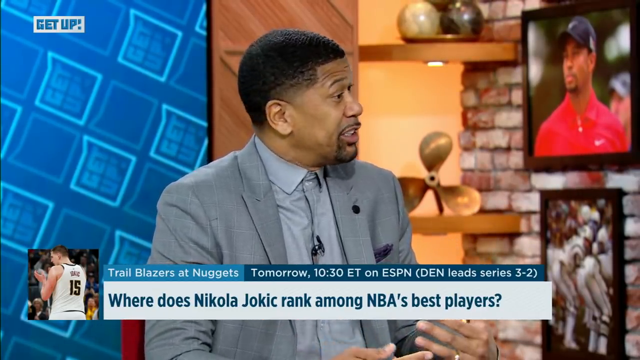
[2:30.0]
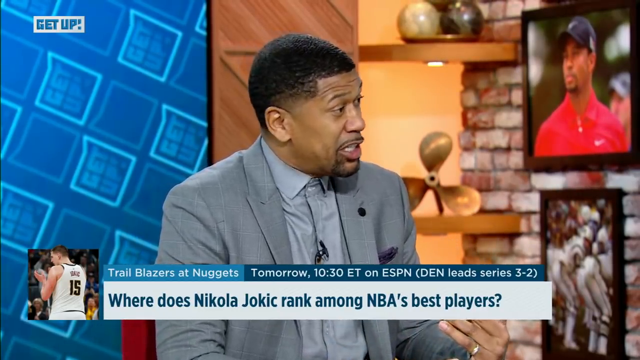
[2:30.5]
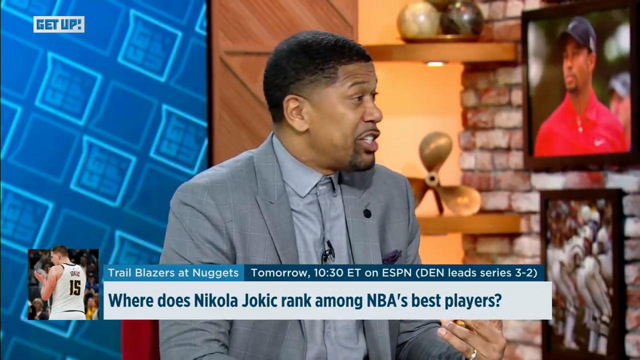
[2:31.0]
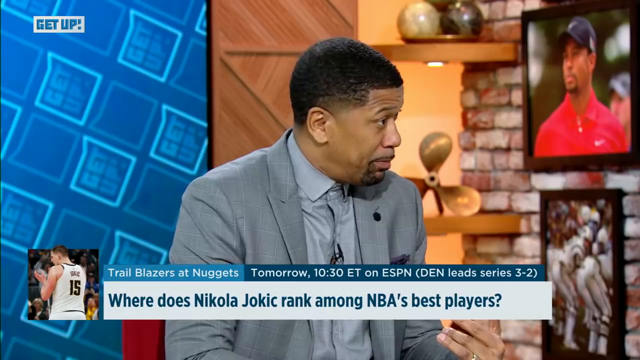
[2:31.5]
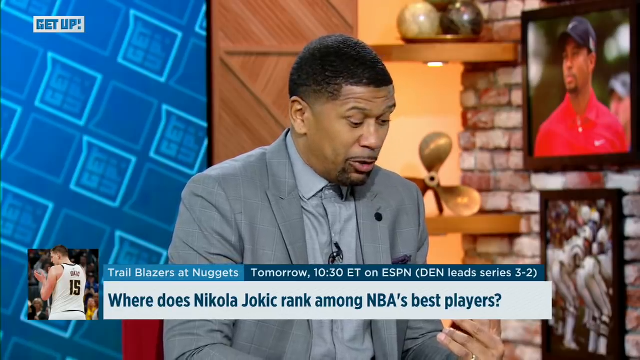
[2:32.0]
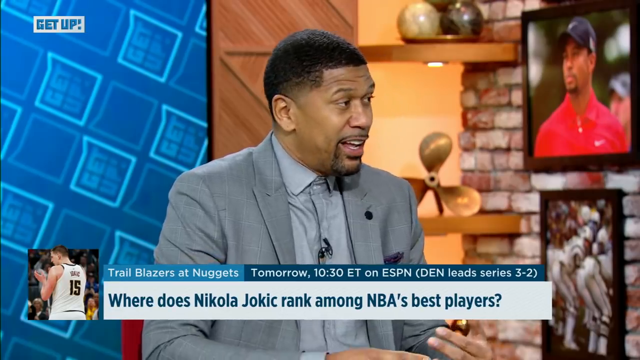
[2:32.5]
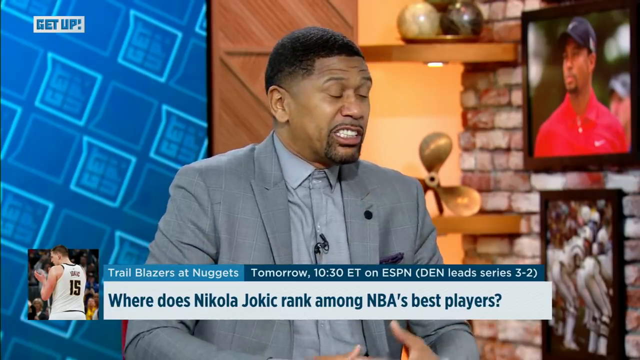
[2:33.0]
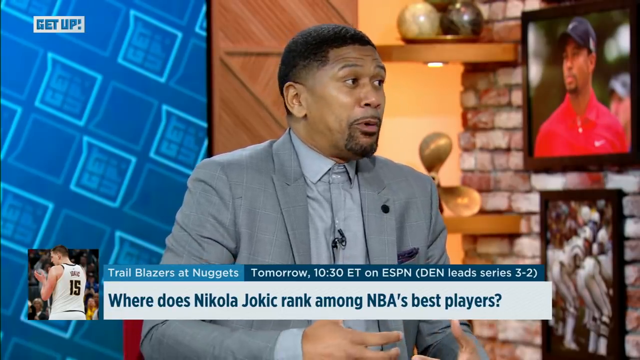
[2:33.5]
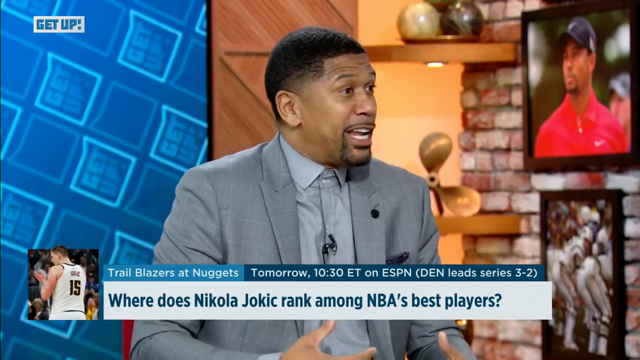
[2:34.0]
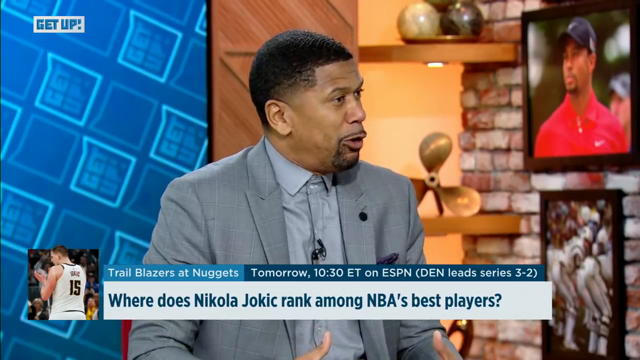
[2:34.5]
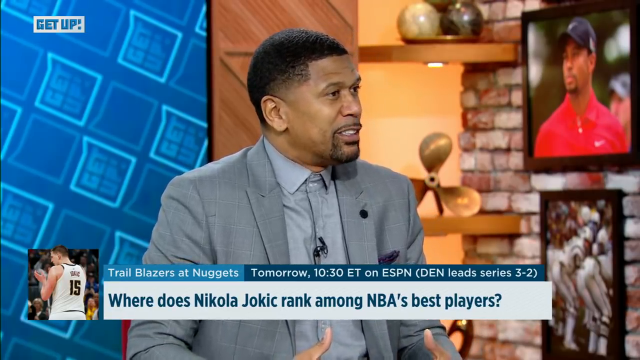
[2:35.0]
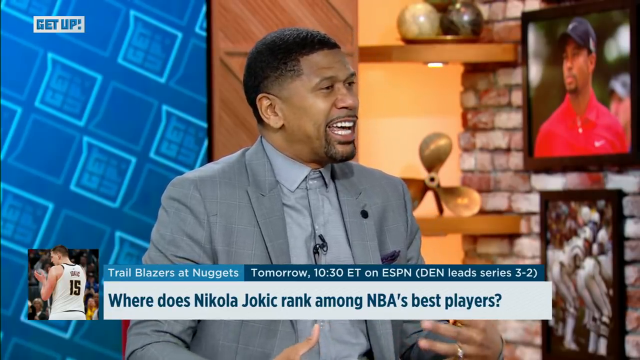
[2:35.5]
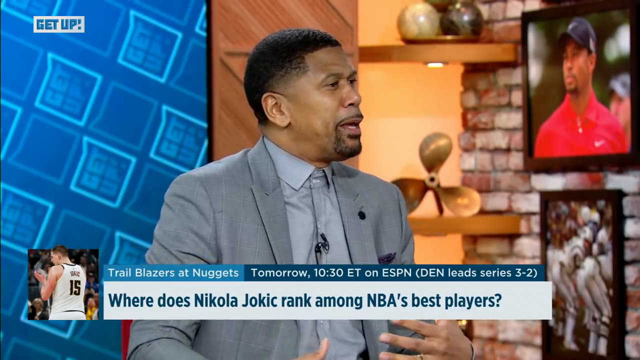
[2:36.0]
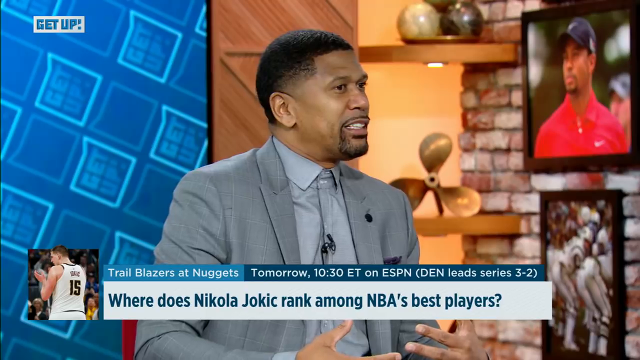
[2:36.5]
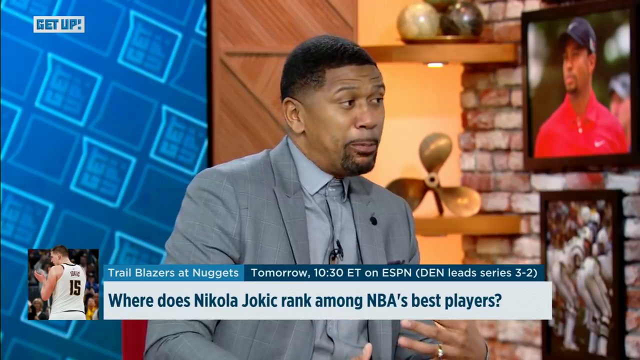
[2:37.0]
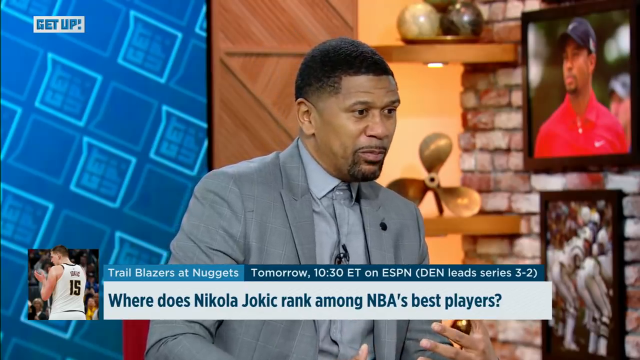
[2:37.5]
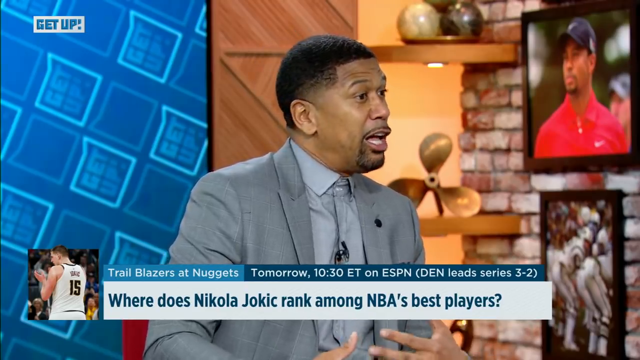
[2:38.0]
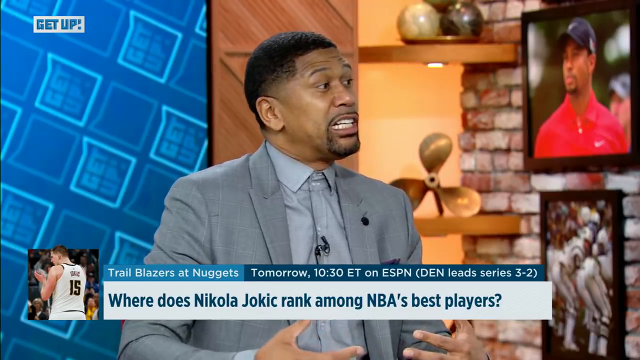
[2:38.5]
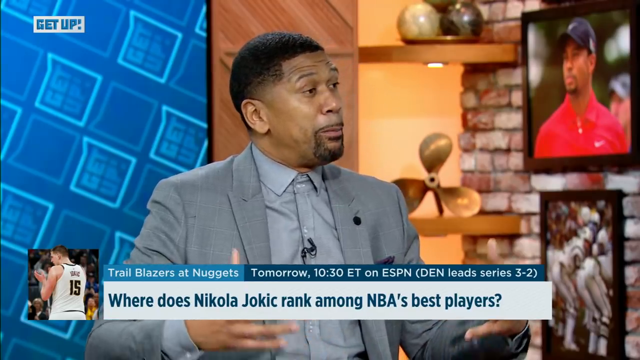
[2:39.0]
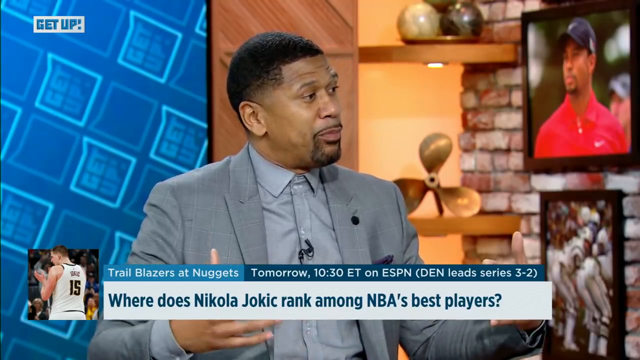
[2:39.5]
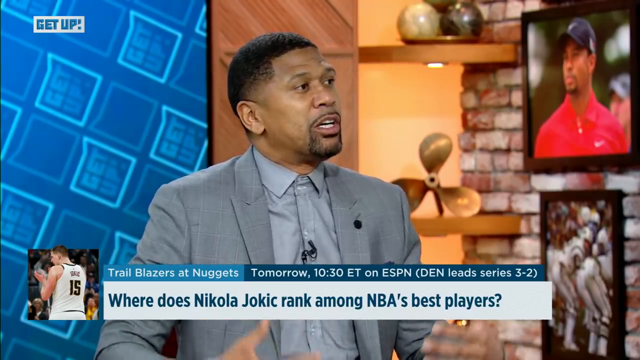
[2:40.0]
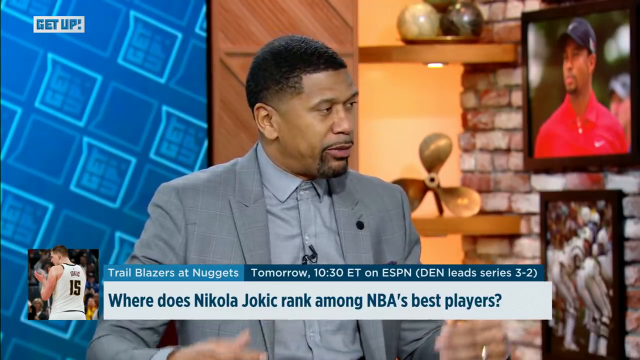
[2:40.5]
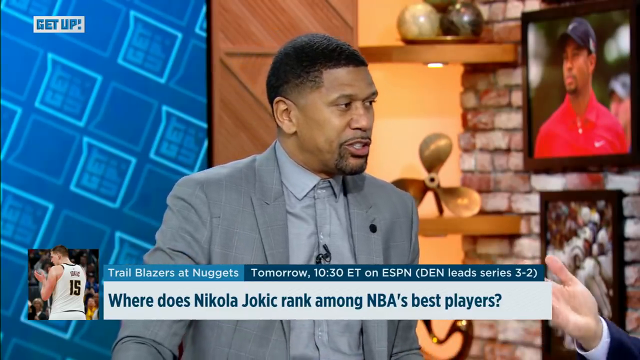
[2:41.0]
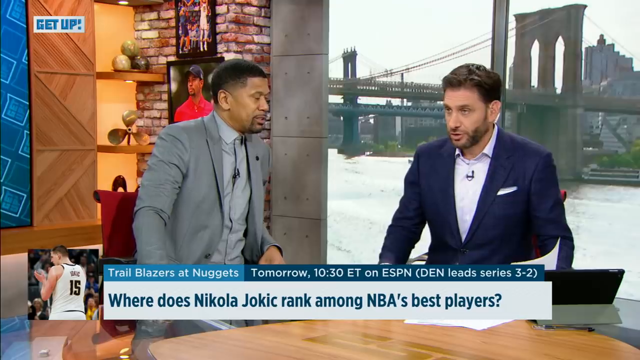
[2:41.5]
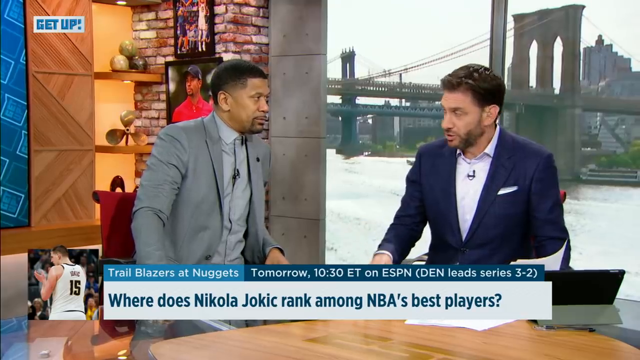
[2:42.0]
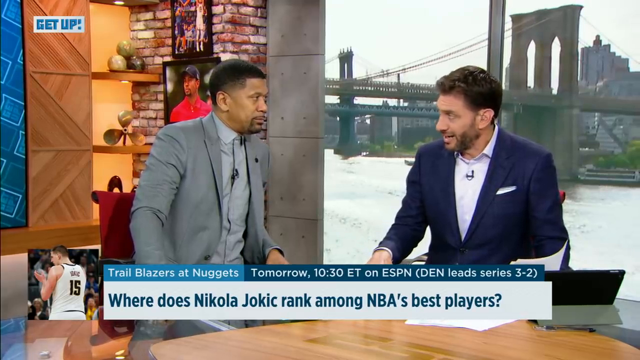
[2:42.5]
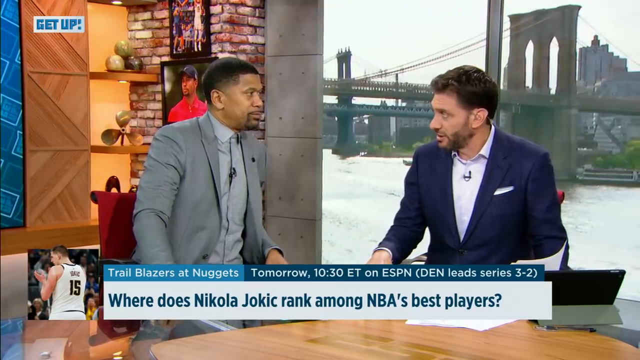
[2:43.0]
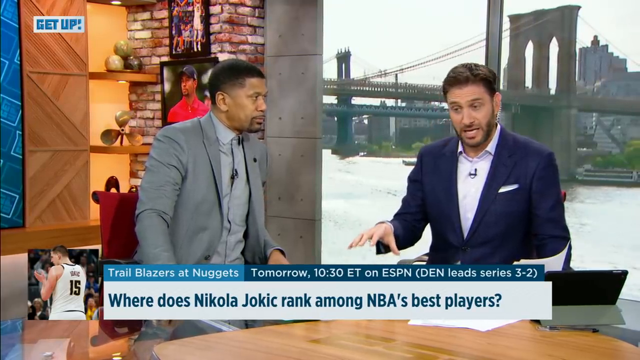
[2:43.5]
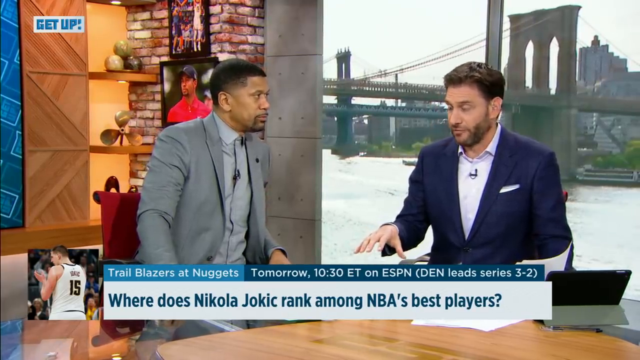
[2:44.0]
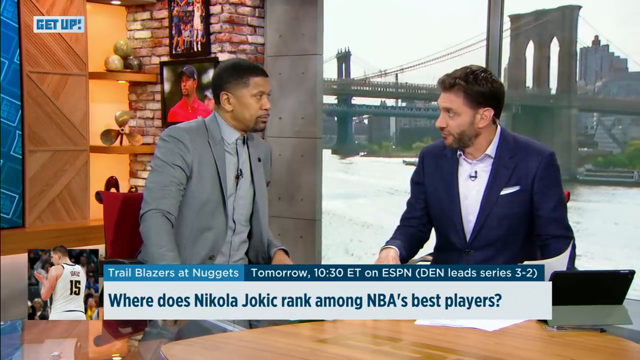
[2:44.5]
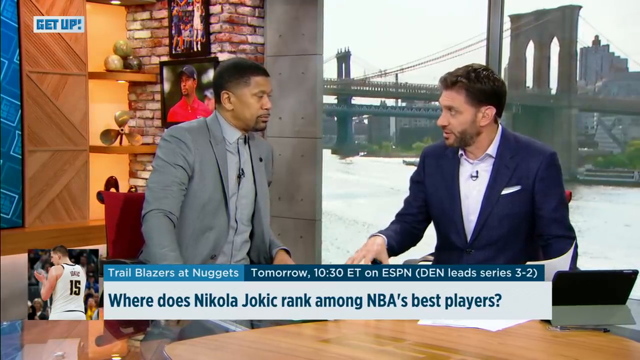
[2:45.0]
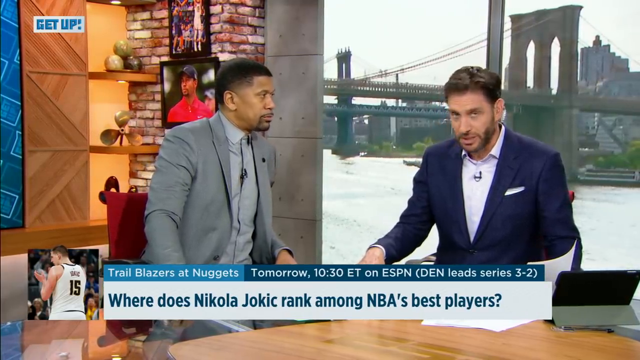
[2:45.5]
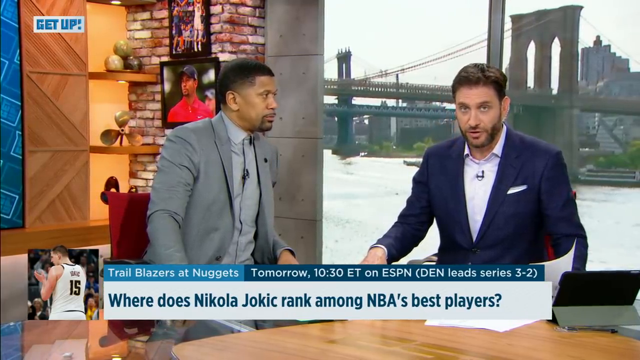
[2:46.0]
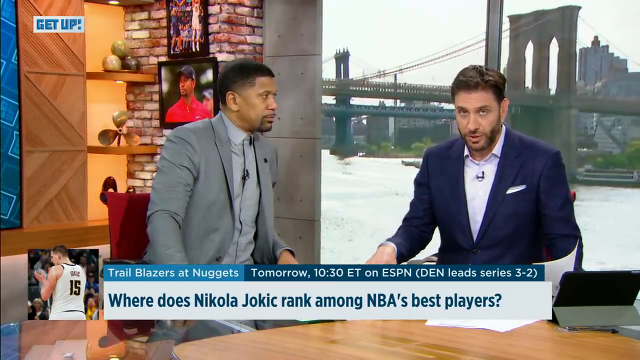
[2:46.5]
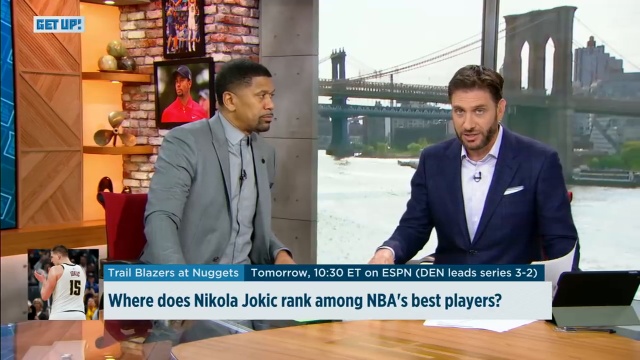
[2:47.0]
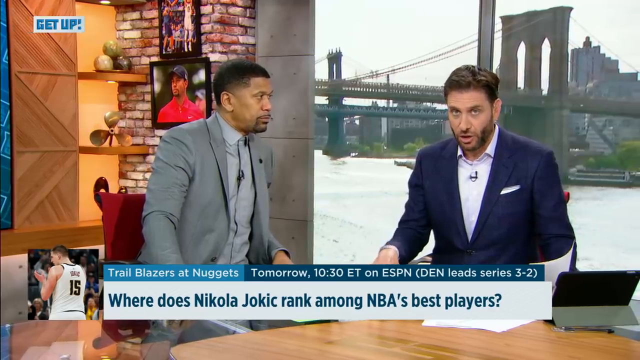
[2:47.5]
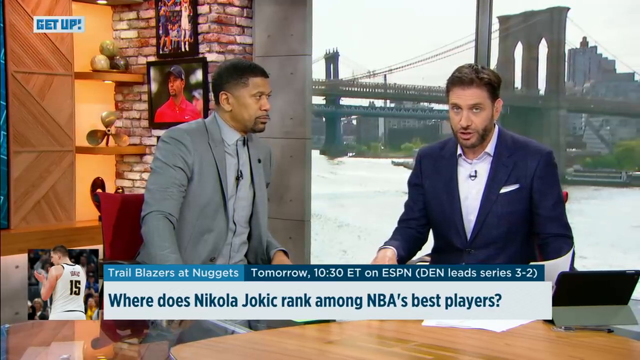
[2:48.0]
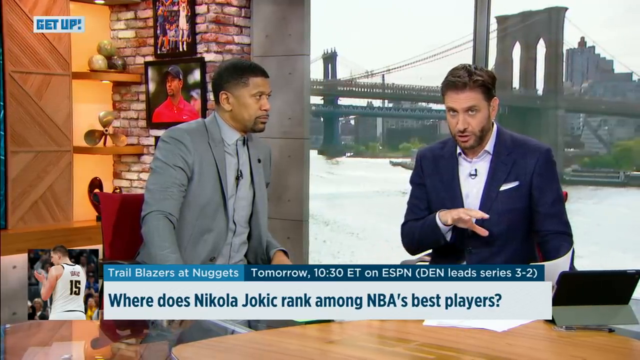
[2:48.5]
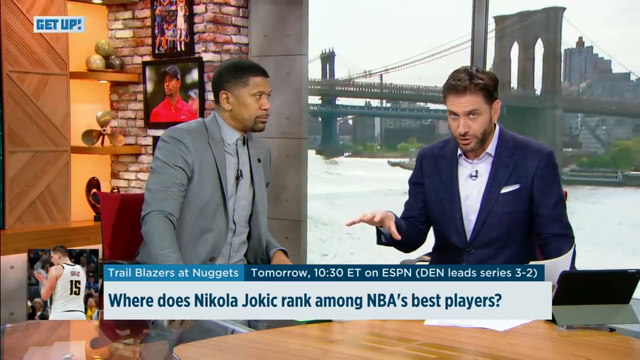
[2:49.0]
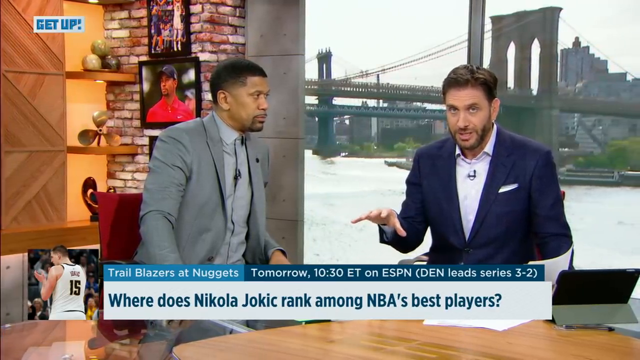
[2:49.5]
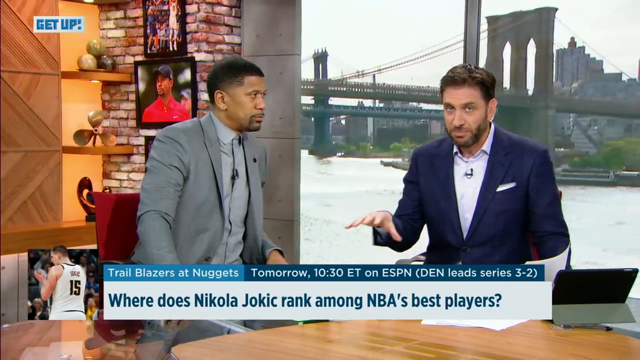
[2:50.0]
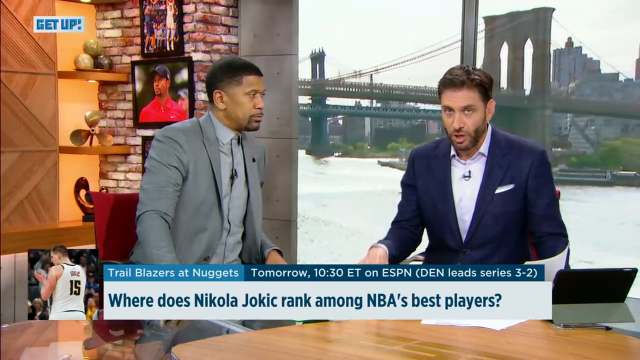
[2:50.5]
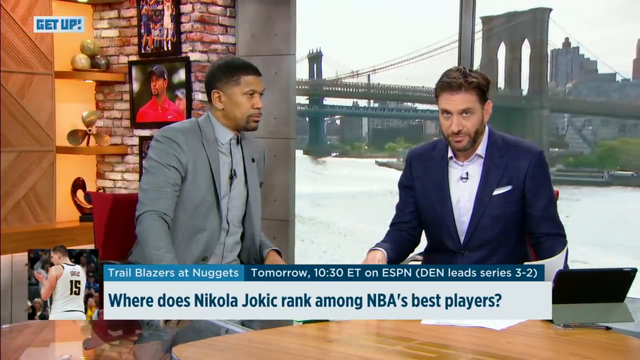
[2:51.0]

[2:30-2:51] The Get Up logo is in the top left. A framed photo of Tiger Woods is on the wall on the far right, and below it is another framed photograph that may show highlights from a football game. In the bottom left is the image of Jokic wearing 15, with the information bar next to it stretching across the rest of the bottom of the screen. The gray-shirted man continues to speak, gesticulating with his hands, and then the other man appears. The two backgrounds are starkly different, although the men seem to be in the same location: the man in the gray jacket and shirt appears to have a studio background with things on the walls and some items on shelving, while the man on the right has a river and an oldish-looking bridge behind him, as if seen through a window covering the area behind him.